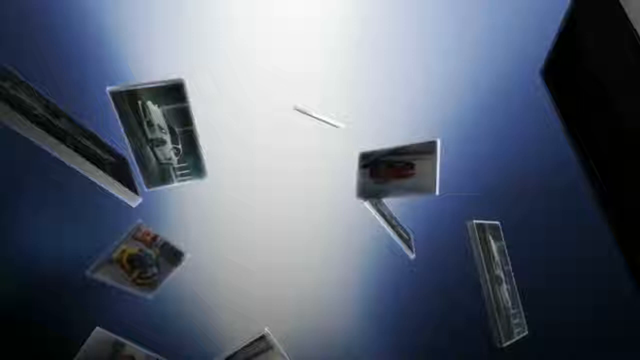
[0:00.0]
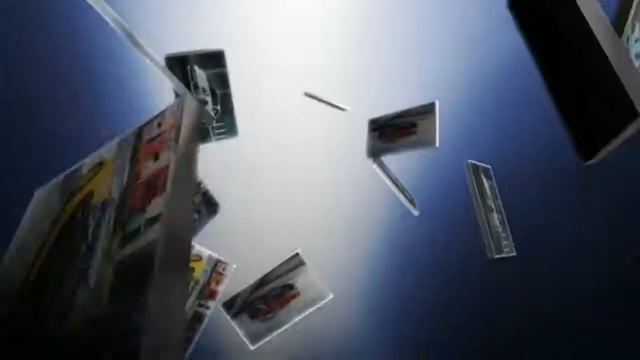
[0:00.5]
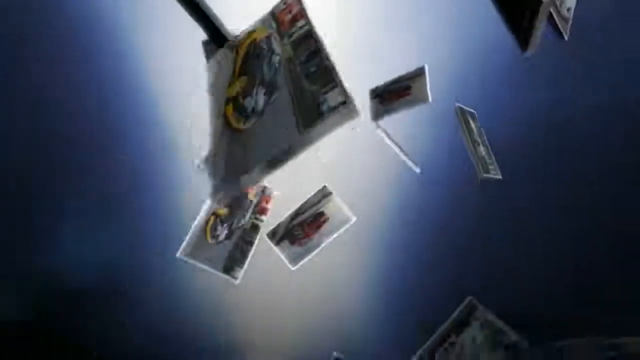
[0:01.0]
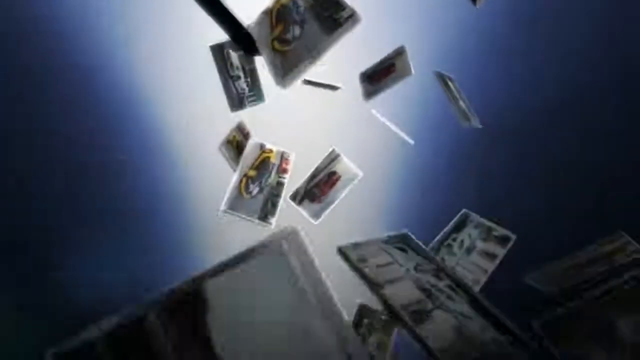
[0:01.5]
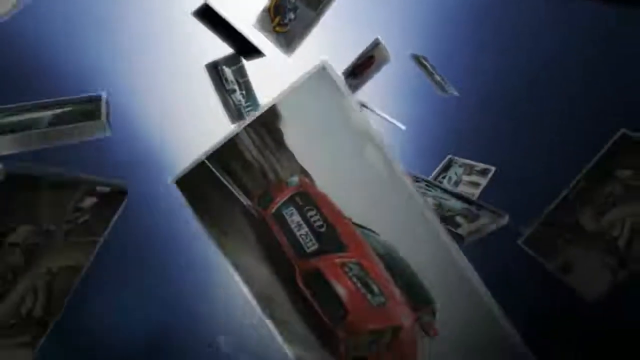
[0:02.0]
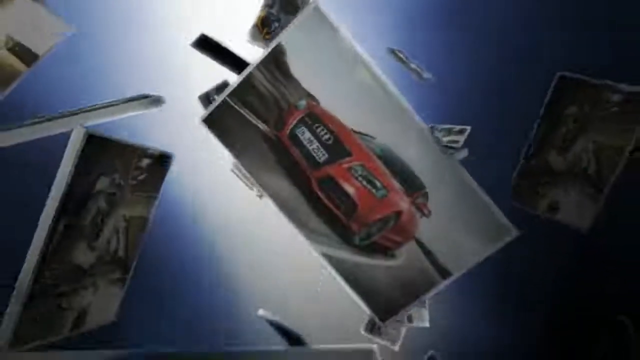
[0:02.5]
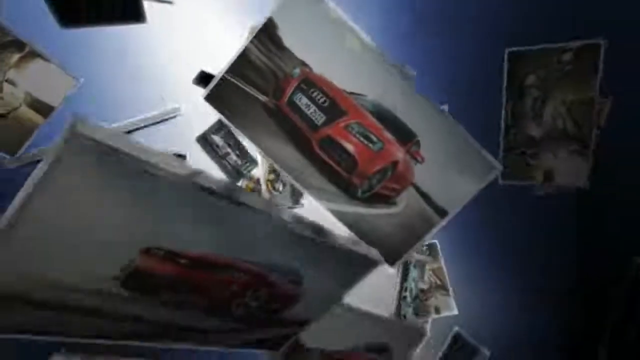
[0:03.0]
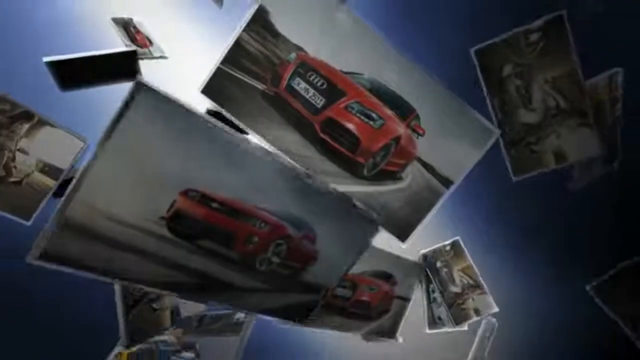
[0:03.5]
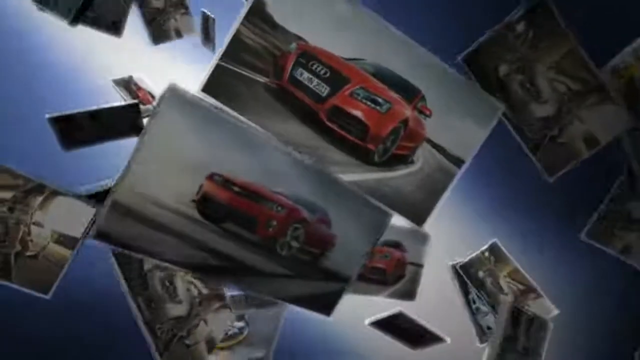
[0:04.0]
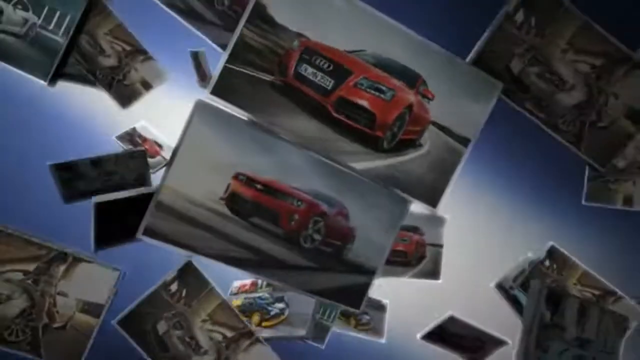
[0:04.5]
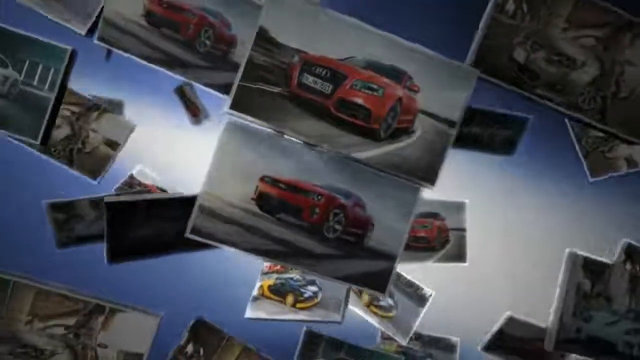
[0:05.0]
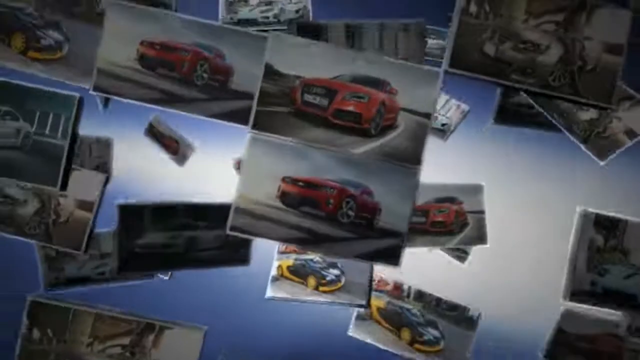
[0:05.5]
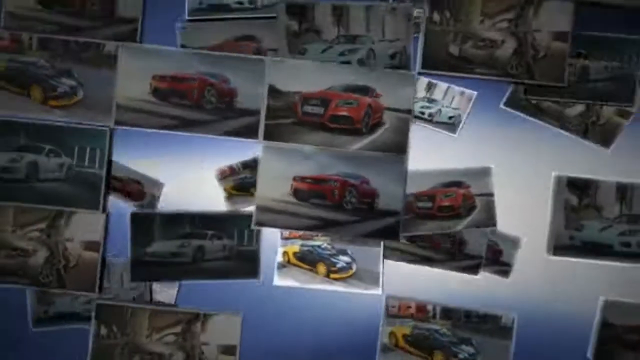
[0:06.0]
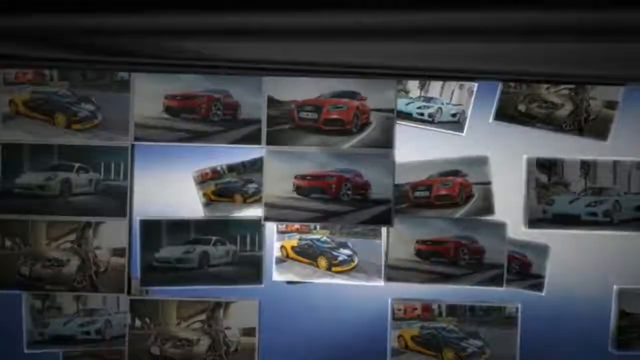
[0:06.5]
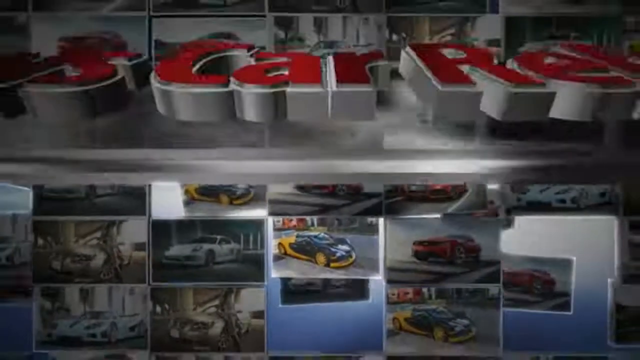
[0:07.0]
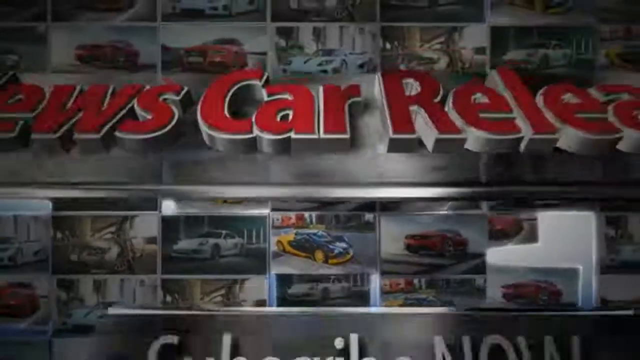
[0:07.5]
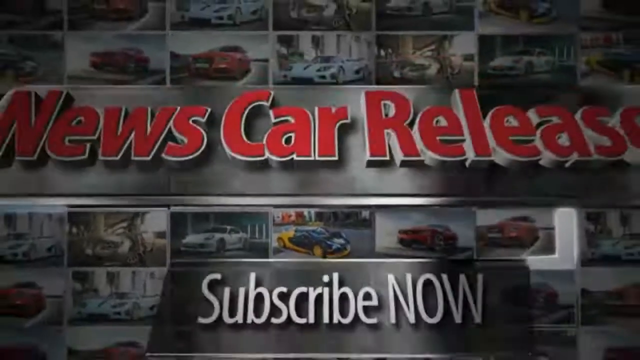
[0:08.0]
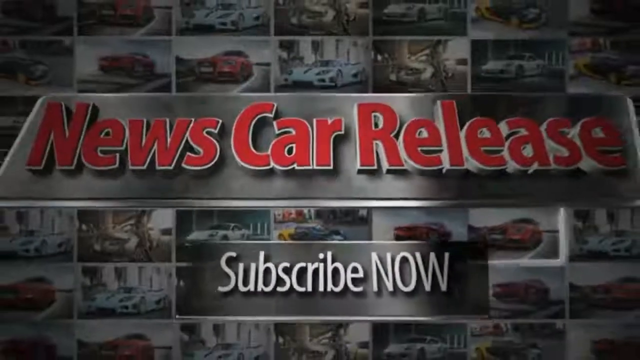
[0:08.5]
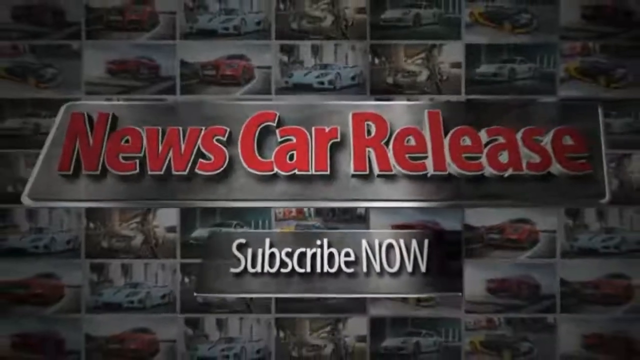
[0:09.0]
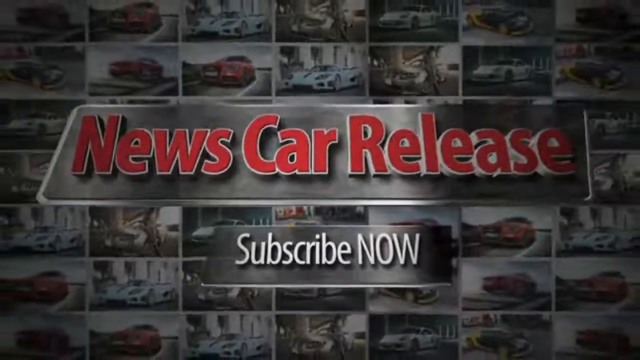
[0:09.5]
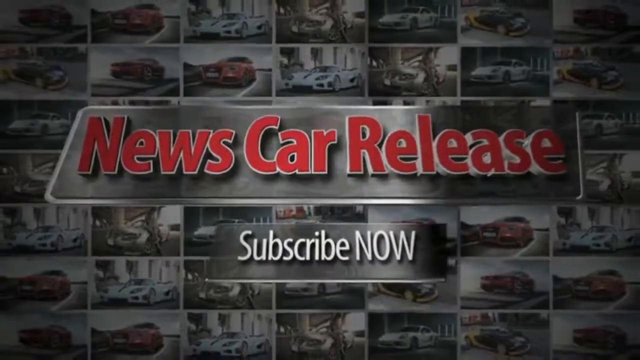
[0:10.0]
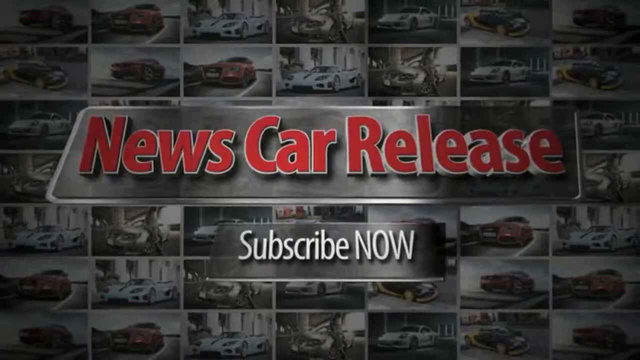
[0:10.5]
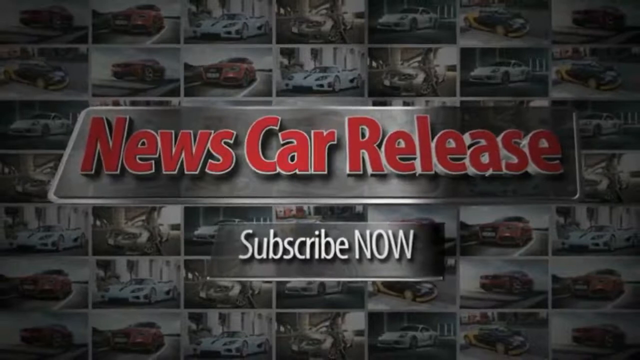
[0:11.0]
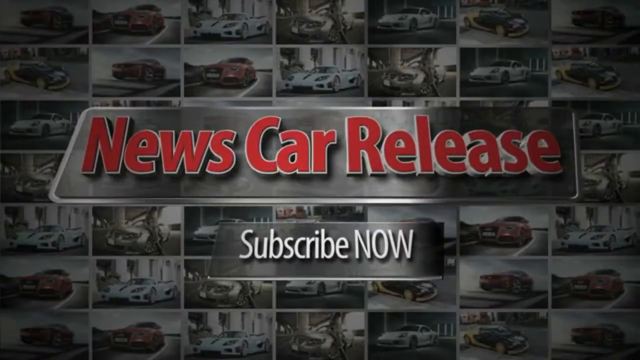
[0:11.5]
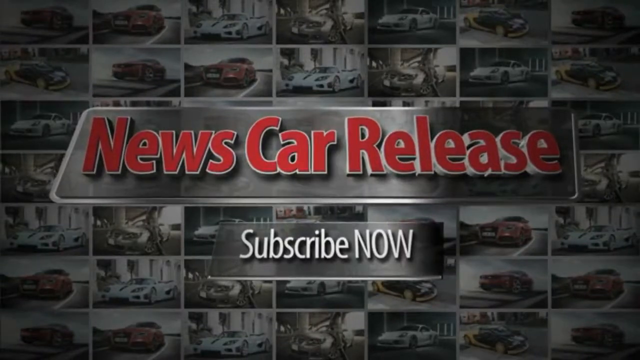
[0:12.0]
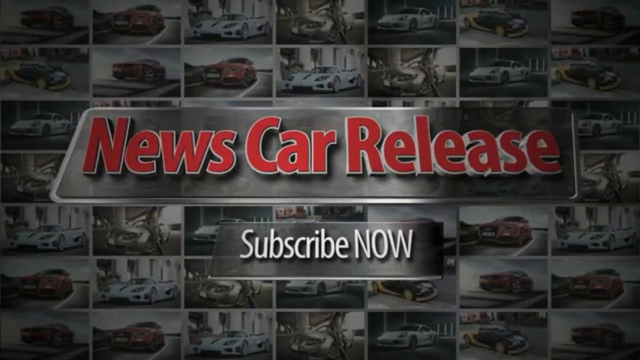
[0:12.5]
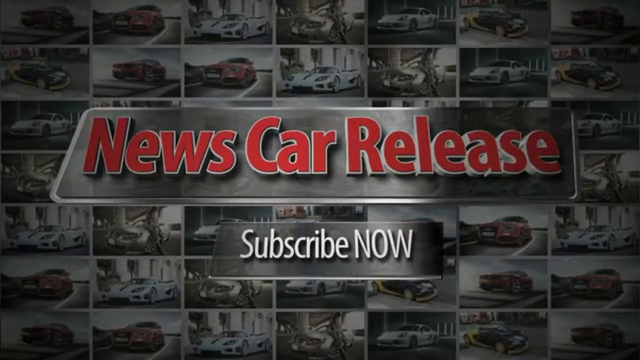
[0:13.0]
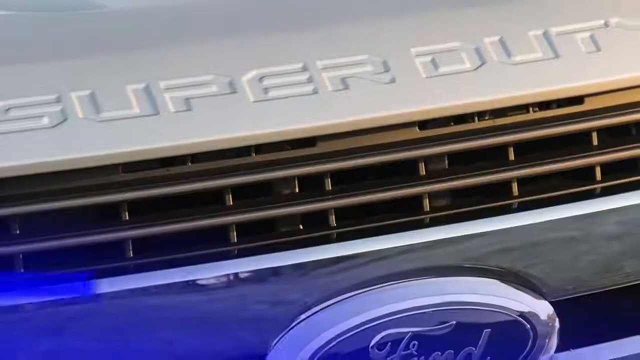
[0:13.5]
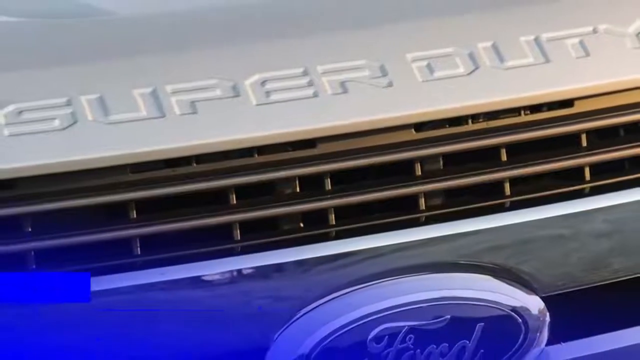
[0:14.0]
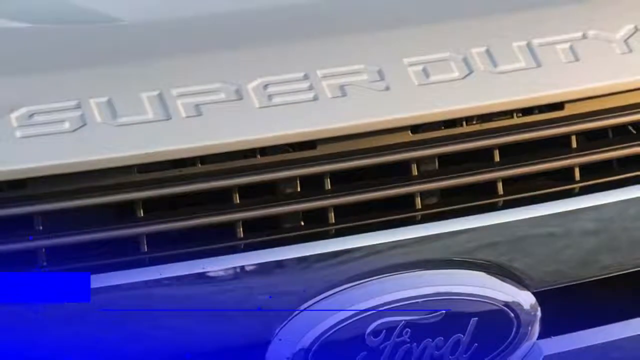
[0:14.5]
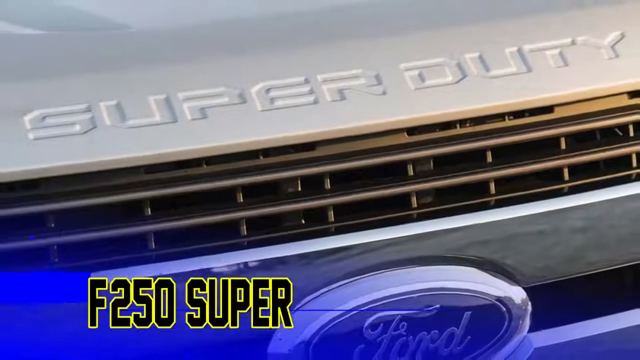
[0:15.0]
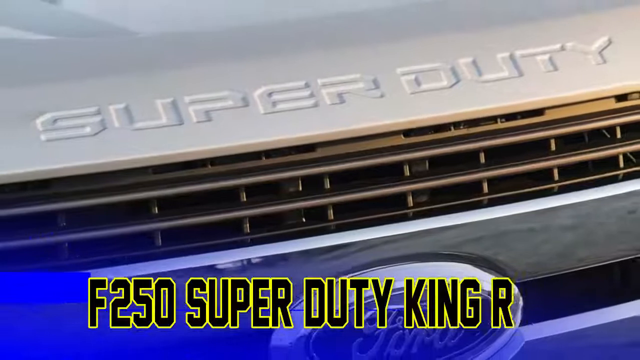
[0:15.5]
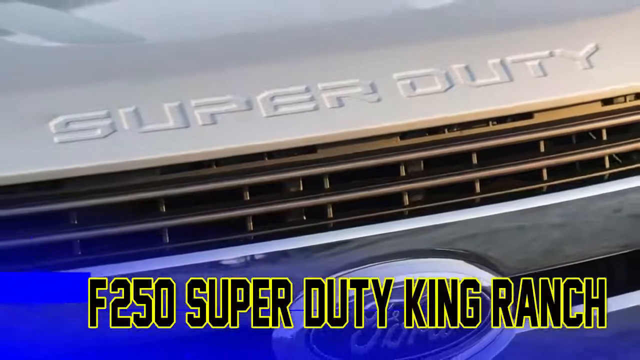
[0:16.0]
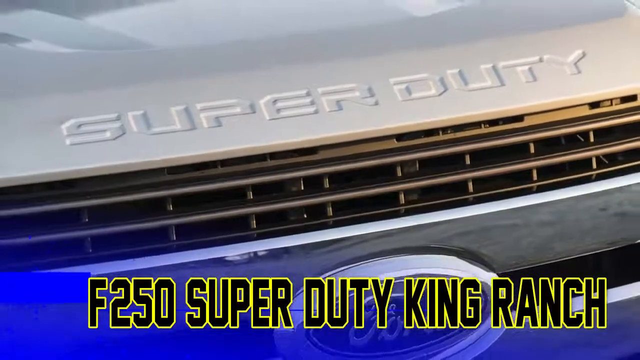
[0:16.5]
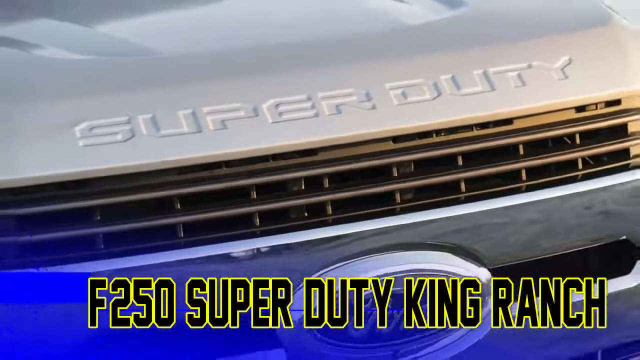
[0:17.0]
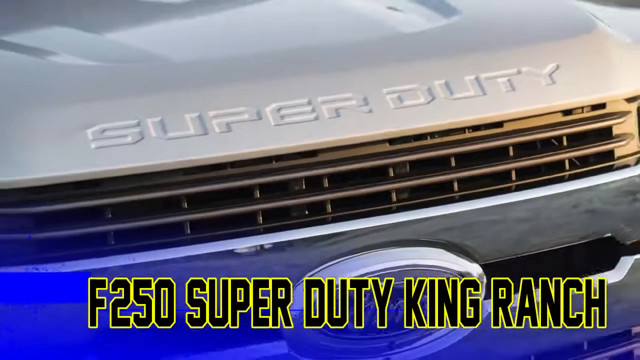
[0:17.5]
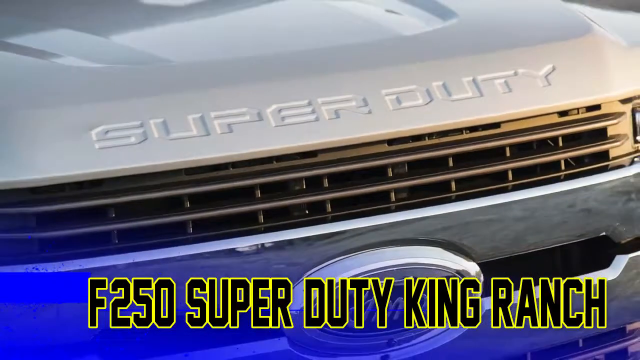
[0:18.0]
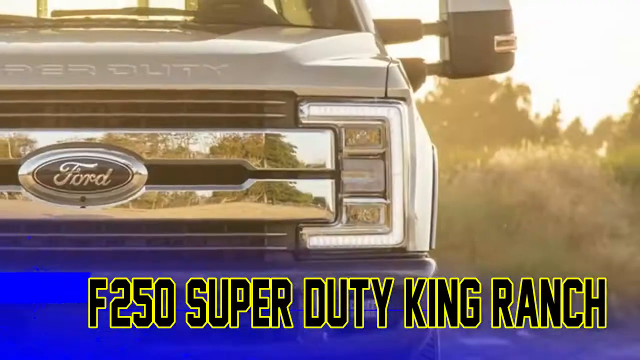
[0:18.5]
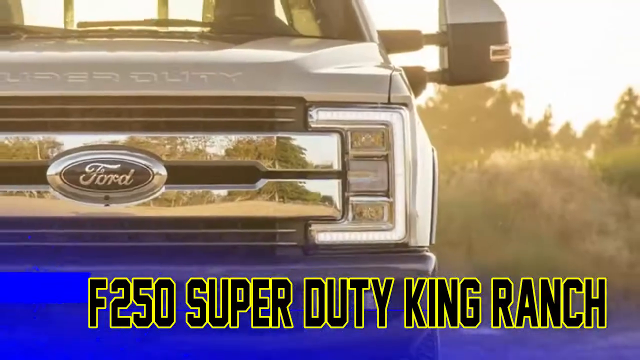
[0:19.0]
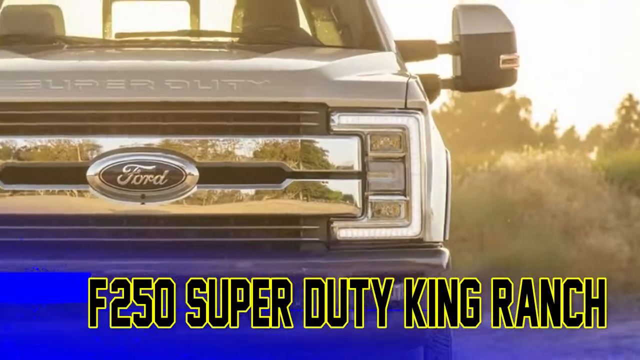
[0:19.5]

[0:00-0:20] A random selection of photographs of cars flies in from off the screen, from behind the viewer, swirls around and assembles into a mosaic of pictures. The edges of the image are darker than the center. Over this comes the caption "news car release" in 3D letters on a translucent white rectangular background whose left-hand side is slightly diagonal, and below it "subscribe now" in the shape of something like a car's rear-view mirror. Next is a zoomed-in image of the radiator grille of a vehicle, with the letters "super duty" embossed on the top of the bonnet. The image zooms out a little to reveal a Ford logo, and a caption comes in from the side as if being typed, in the sort of font seen on the back of an American football jersey: "f-250 super duty king ranch". The view then moves sideways to another photograph showing the front of the truck.